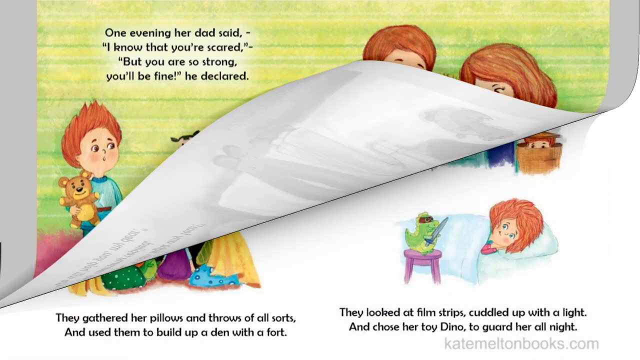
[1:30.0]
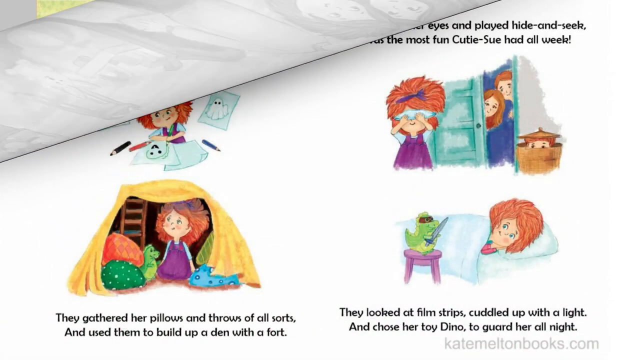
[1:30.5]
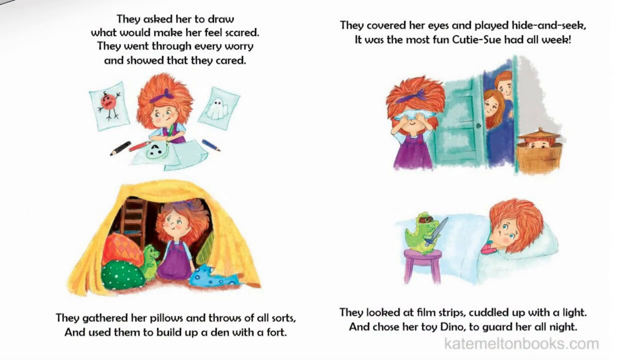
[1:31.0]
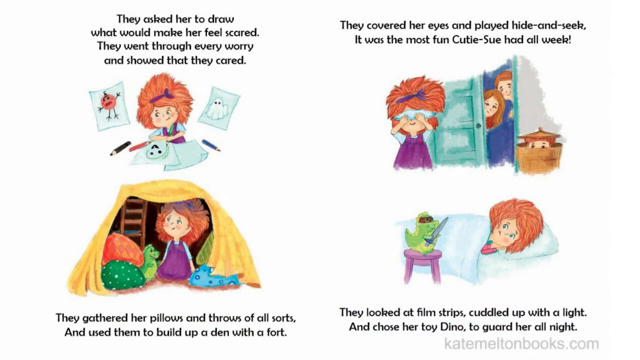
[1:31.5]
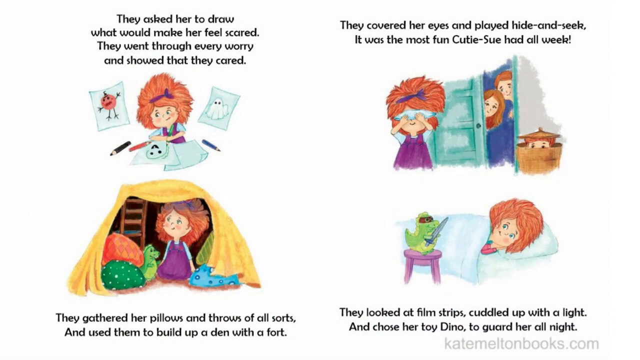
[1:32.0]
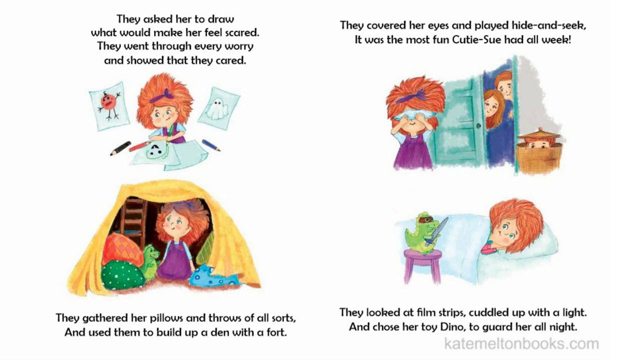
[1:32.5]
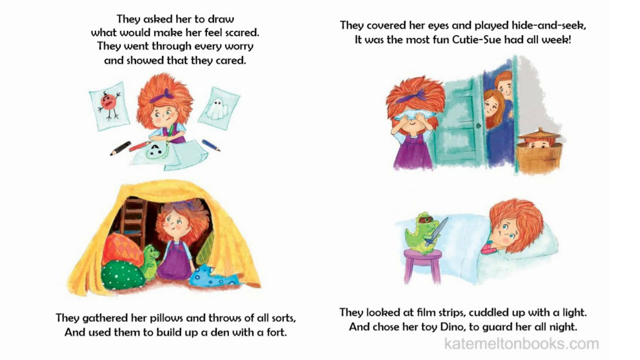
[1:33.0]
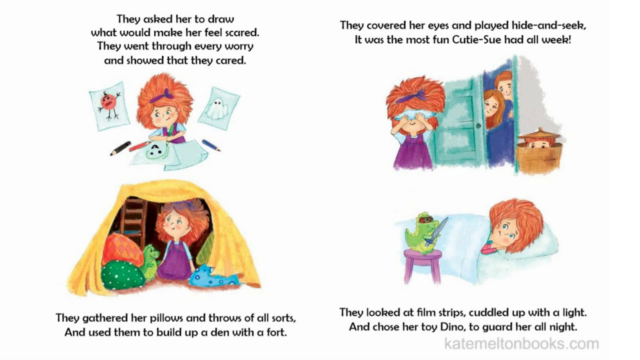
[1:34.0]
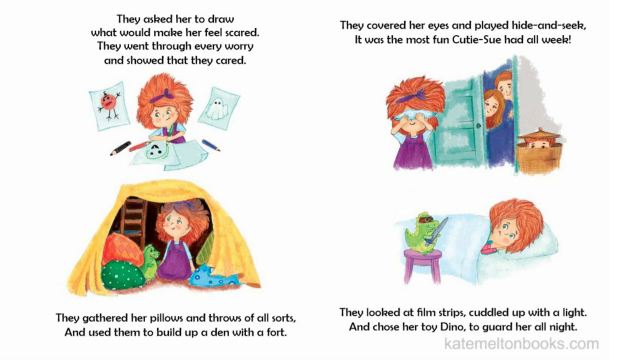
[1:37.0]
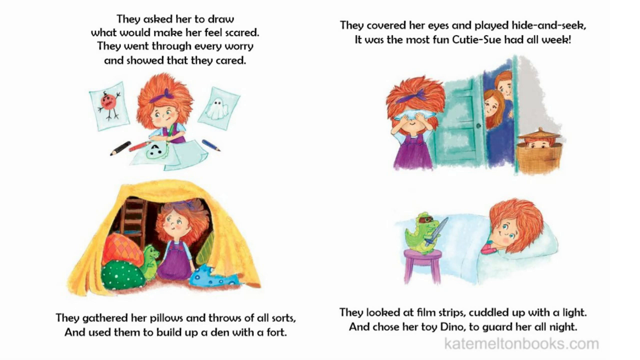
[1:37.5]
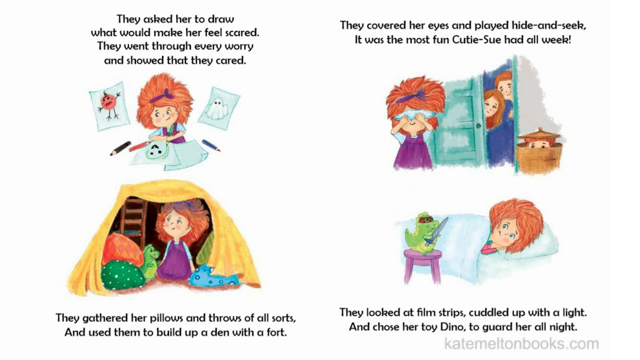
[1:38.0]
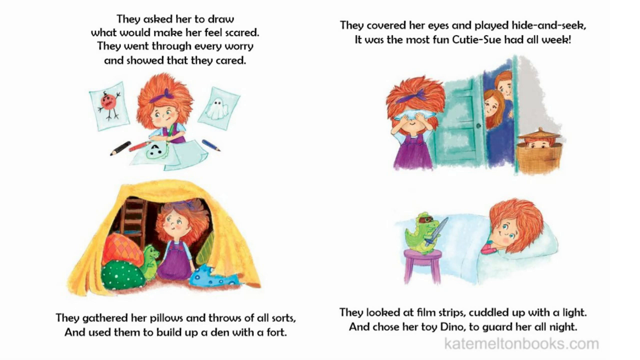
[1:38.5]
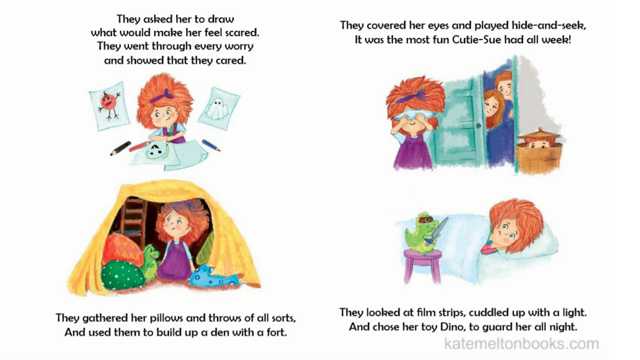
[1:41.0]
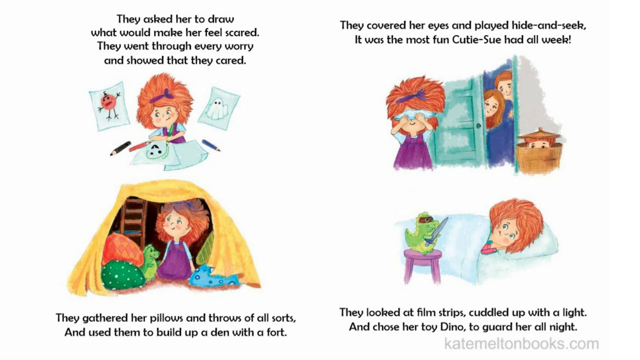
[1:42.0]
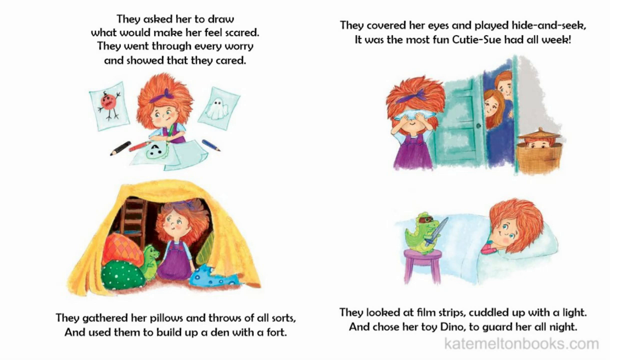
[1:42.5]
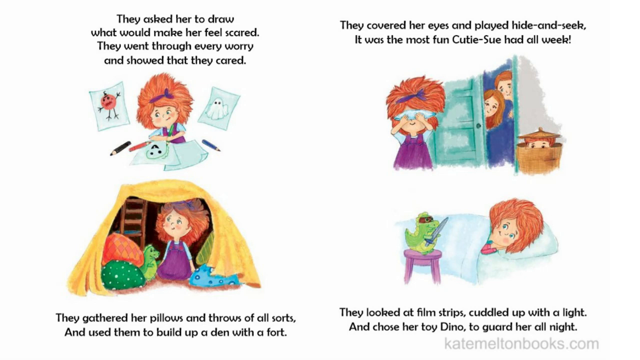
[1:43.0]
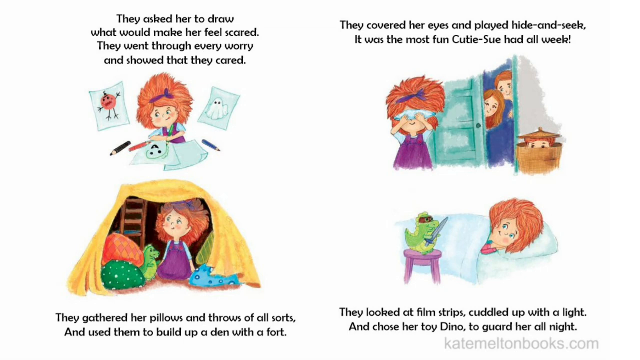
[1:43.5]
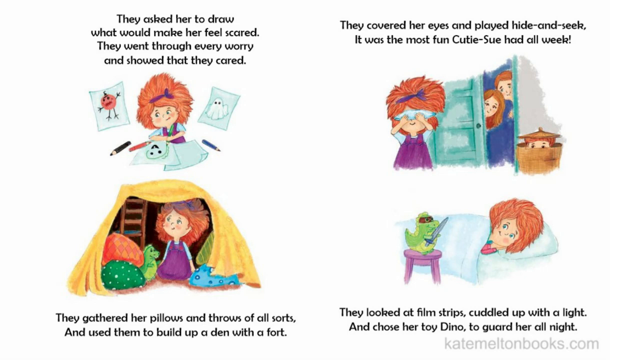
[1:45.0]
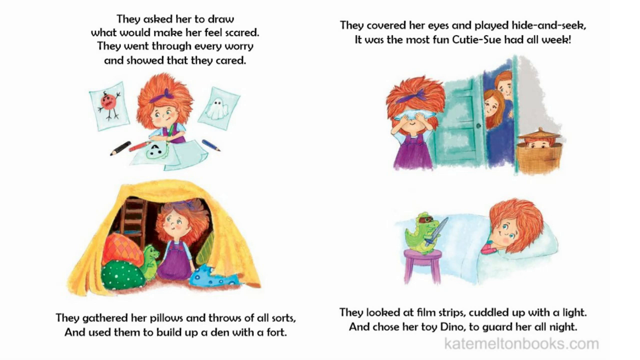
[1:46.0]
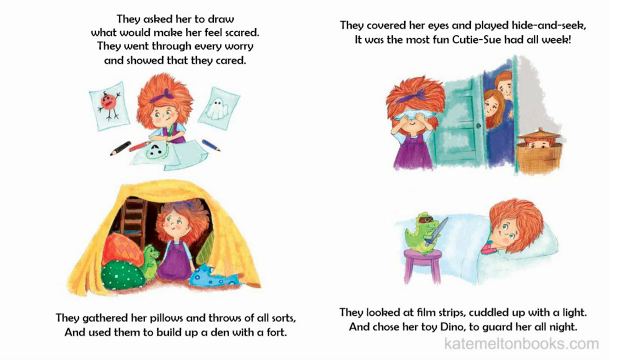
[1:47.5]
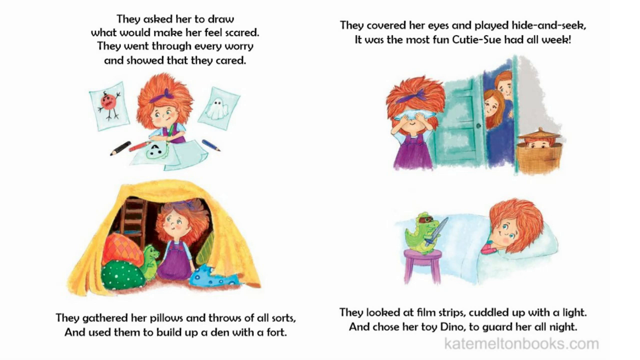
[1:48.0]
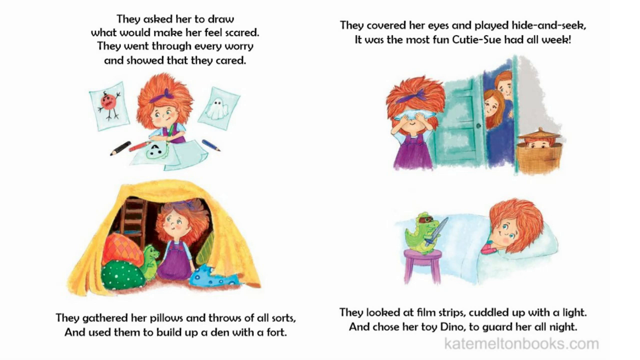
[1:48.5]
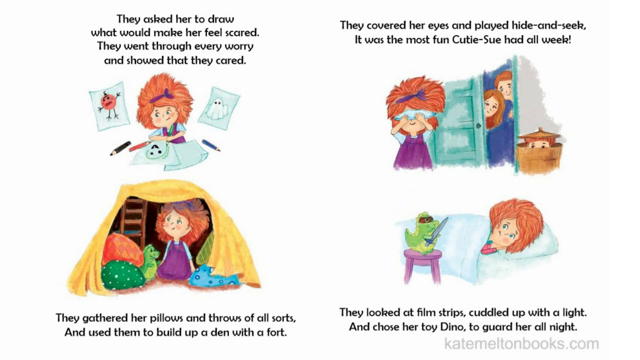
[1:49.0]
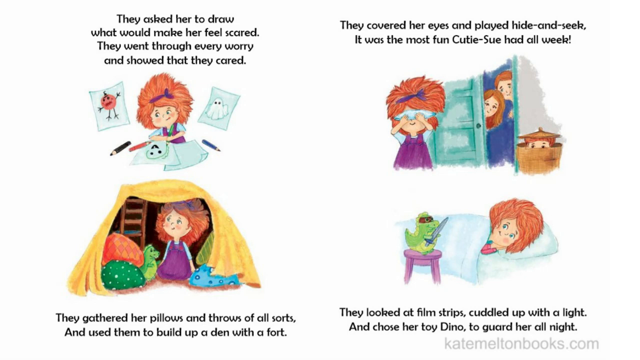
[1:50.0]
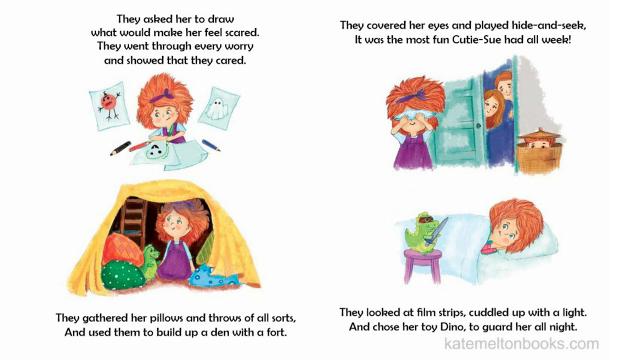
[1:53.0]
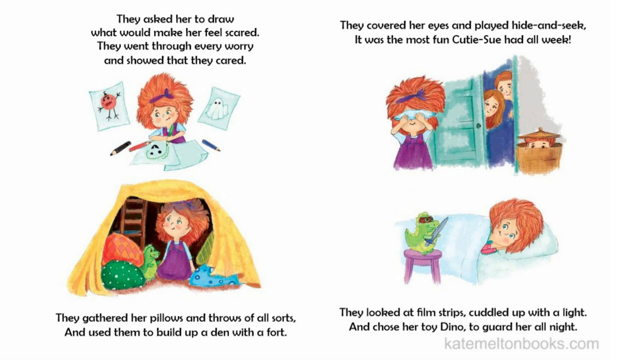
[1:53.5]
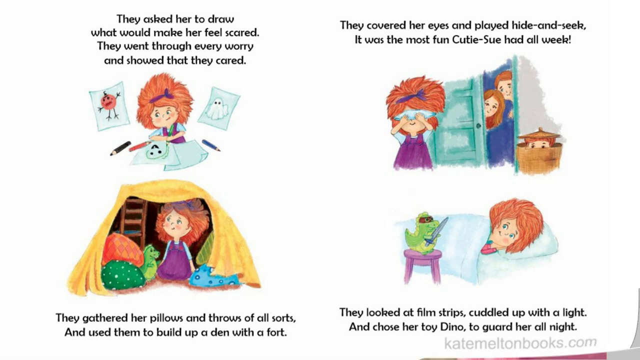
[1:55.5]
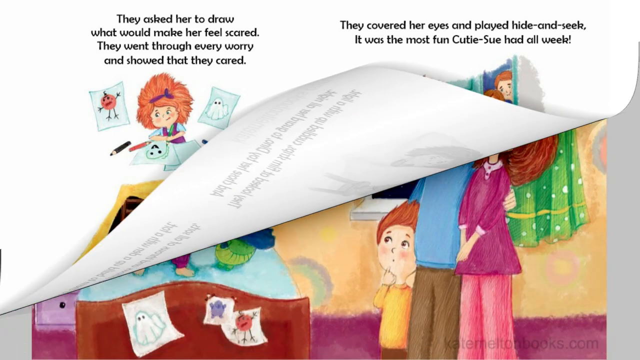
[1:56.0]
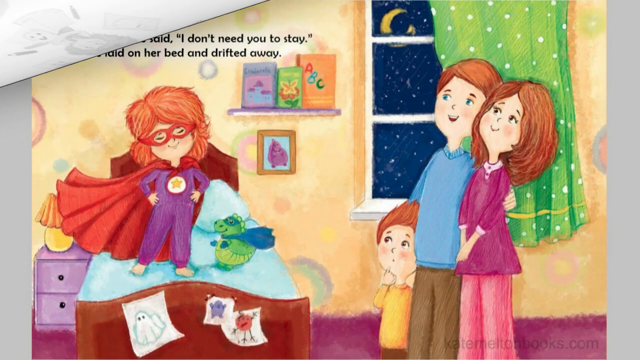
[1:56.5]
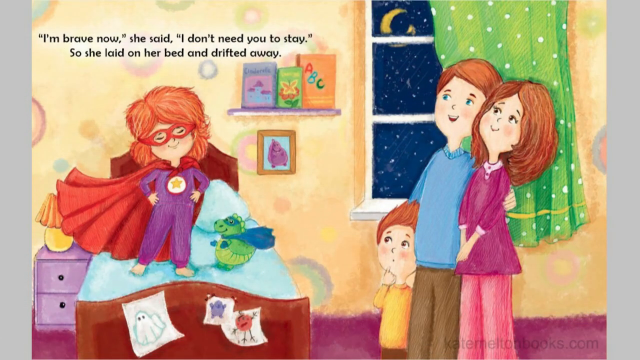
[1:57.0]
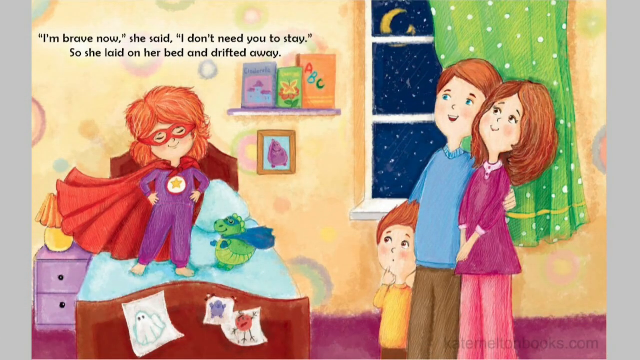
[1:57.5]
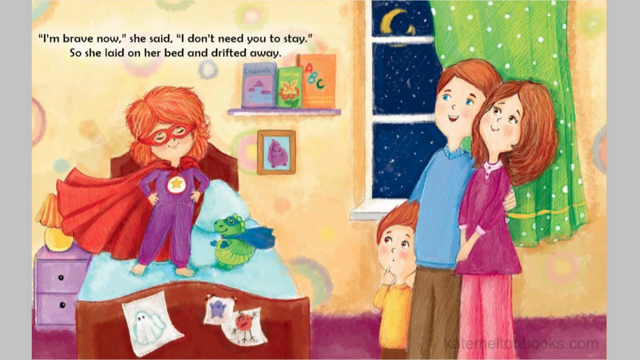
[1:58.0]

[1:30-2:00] The page reads "One evening her dad said, I know that you're scared but you are so strong." Below that, a little boy in blue pajamas holds a teddy bear in his right hand. To his right is a stool with a little stuffed person sitting on top of it, and below that is a stuffed rabbit toy. Text below that includes "I can fight any fear. Her mommy replied, we will help you my dear." The little girl and her parents sit on the bed, and a little stuffed green dinosaur sits on the bed as well. The page turns to text reading "They asked her to draw what would make her feel scared. They went through every worry and showed that they cared. He covered her eyes and played hide and seek. It was the most fun Cutie Sue had all week." It continues with a line ending "used them to build up a den with a fort."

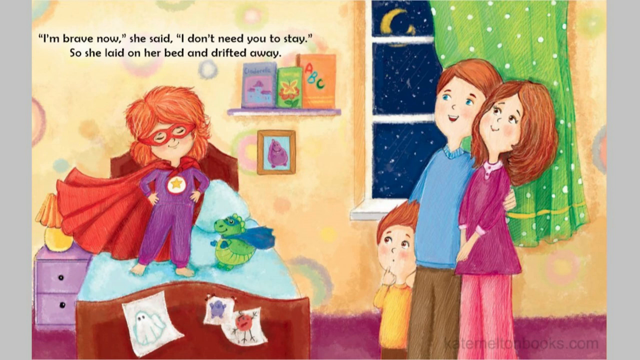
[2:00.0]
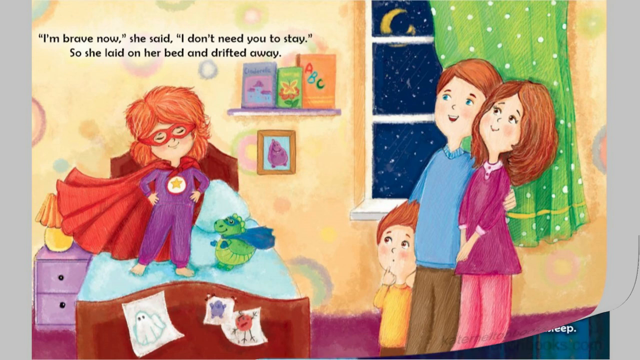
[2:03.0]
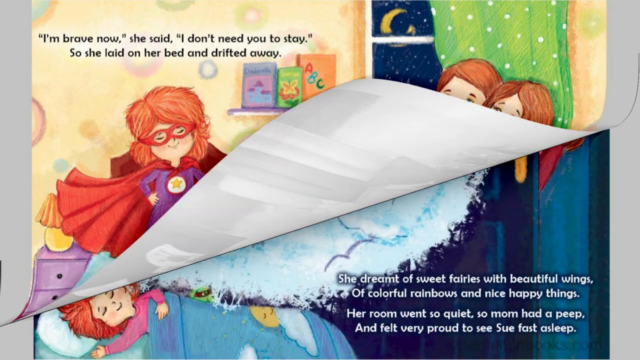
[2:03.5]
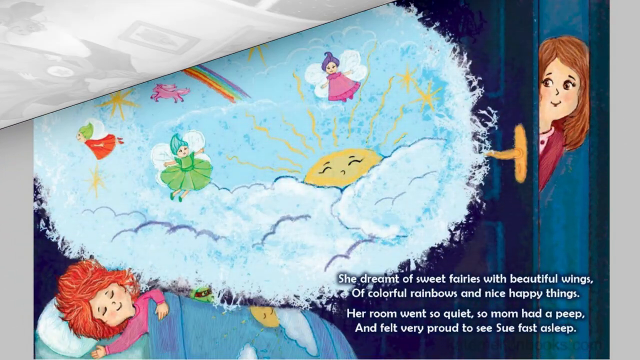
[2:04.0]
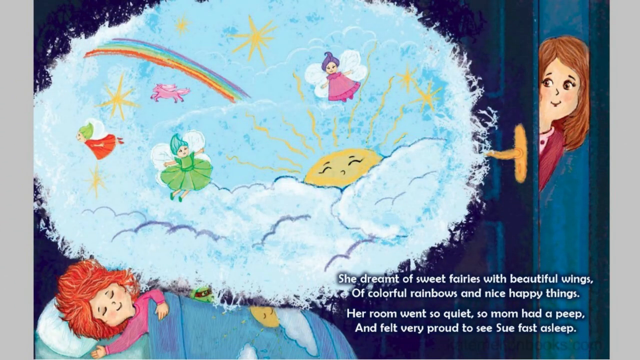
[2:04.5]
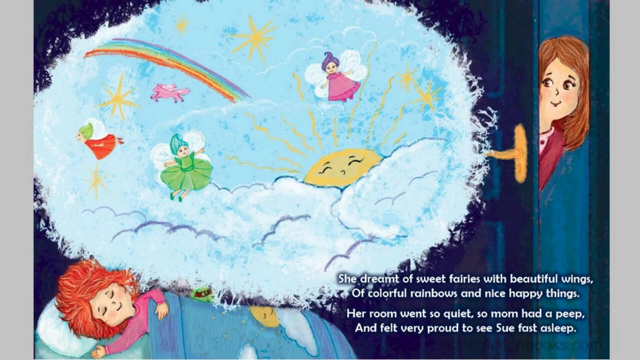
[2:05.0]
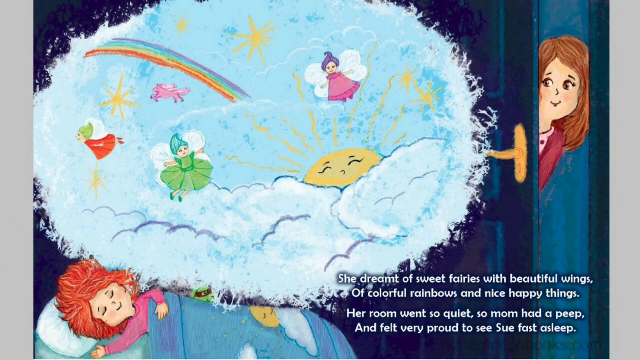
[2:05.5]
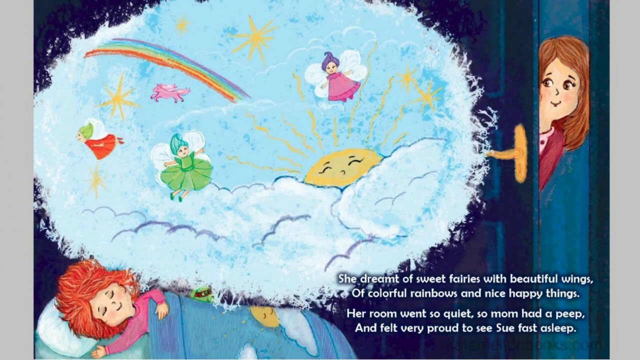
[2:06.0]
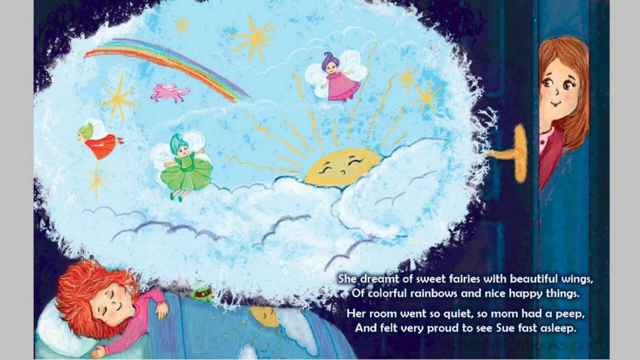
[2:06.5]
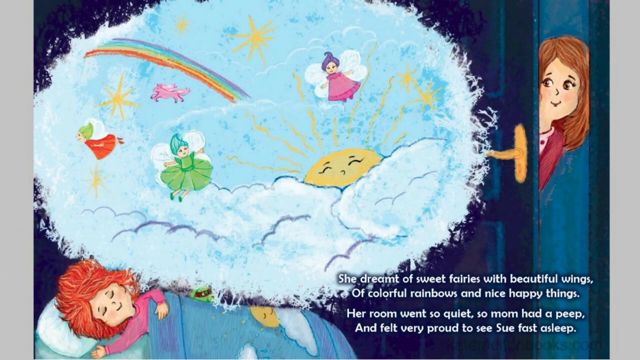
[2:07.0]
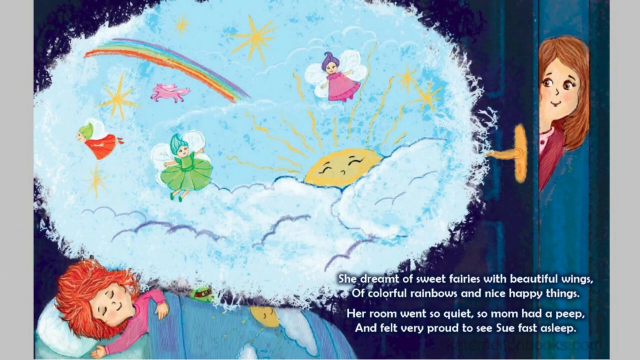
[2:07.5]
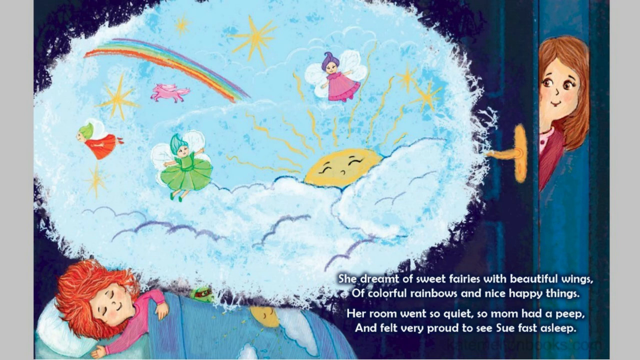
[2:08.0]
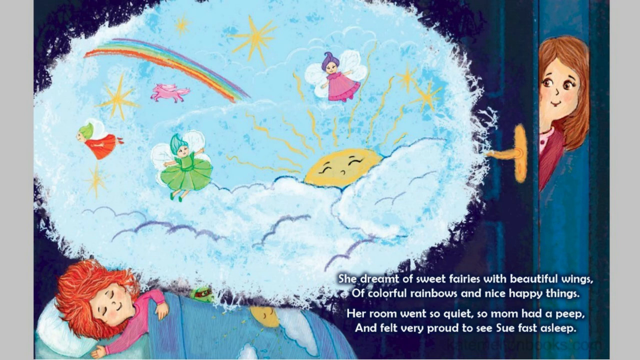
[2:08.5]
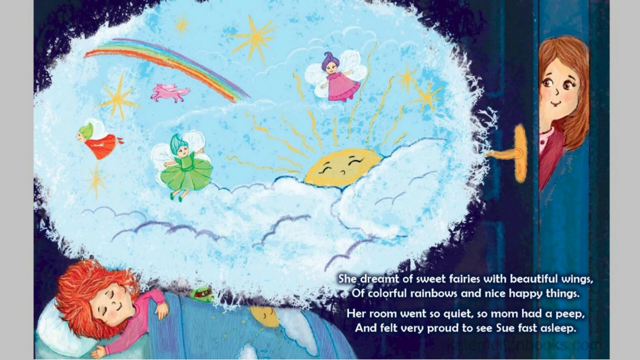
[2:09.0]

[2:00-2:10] An illustrated page reads "I'm brave now, she said, I don't need you to stay. So she's laid on her bed and drifted away." A little girl with orange hair in a superhero outfit, with something covering her eyes and a red cape, stands on the bed. The little green stuffed toy has a cape as well, a blue one. To the right, a little boy and the parents, mom and dad, look at her in awe. In the background, a moon is in the night sky in the window, and there is a green curtain.